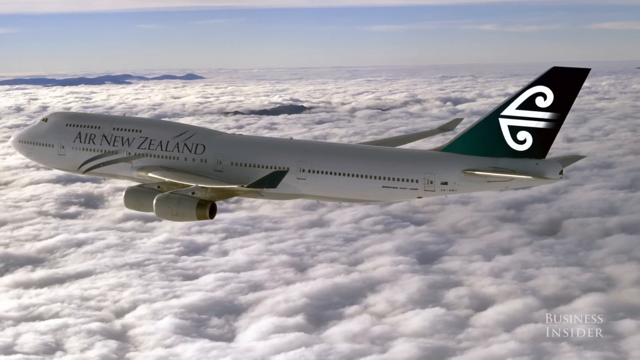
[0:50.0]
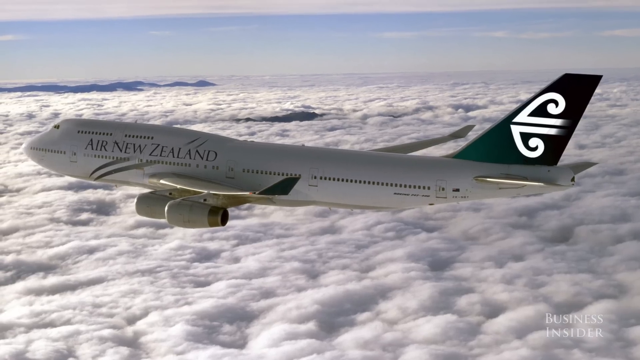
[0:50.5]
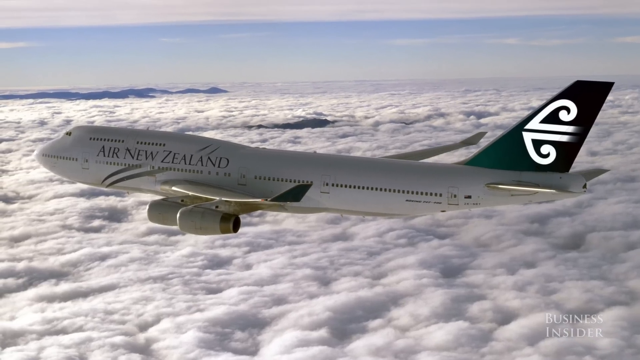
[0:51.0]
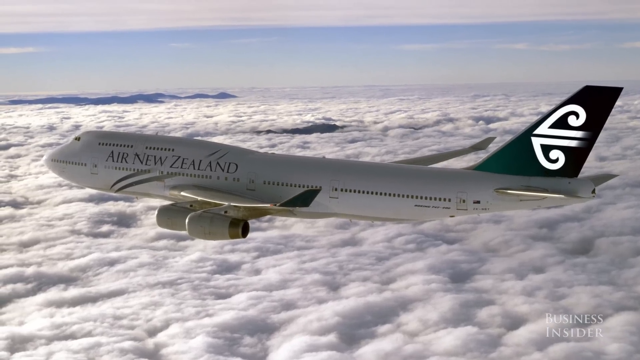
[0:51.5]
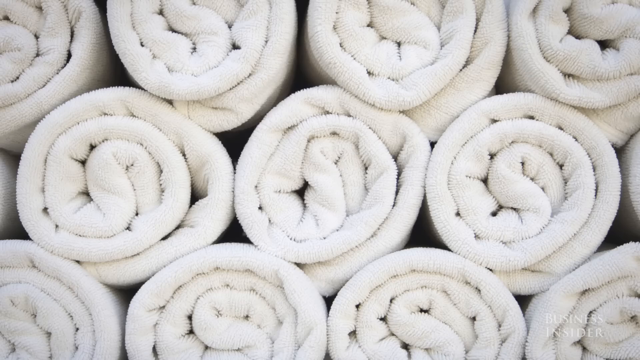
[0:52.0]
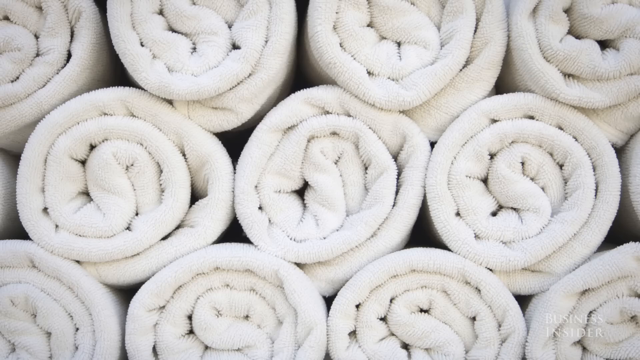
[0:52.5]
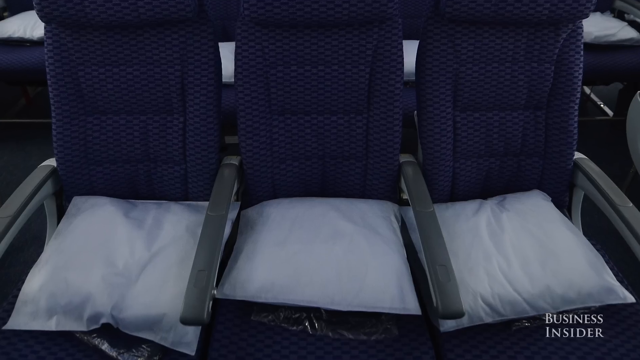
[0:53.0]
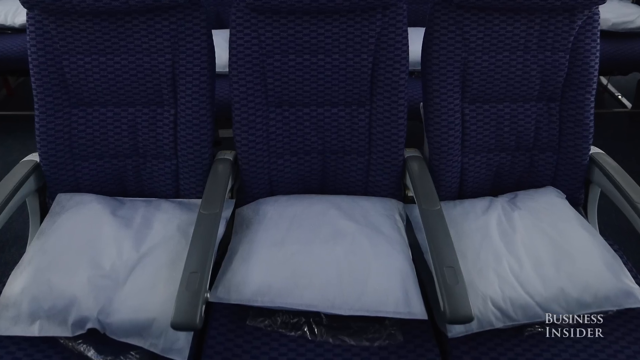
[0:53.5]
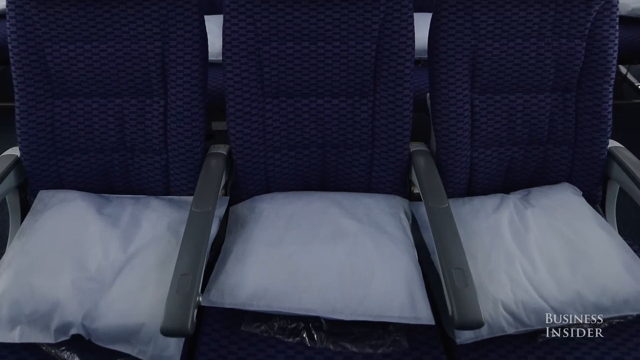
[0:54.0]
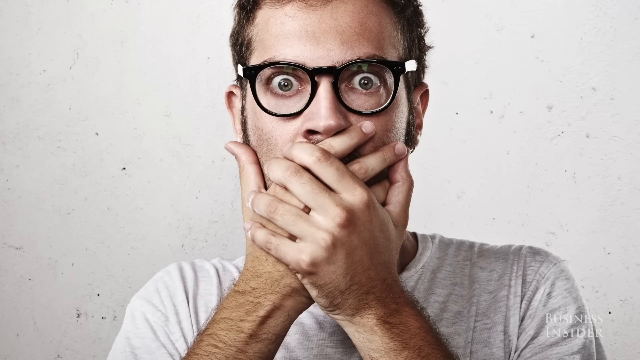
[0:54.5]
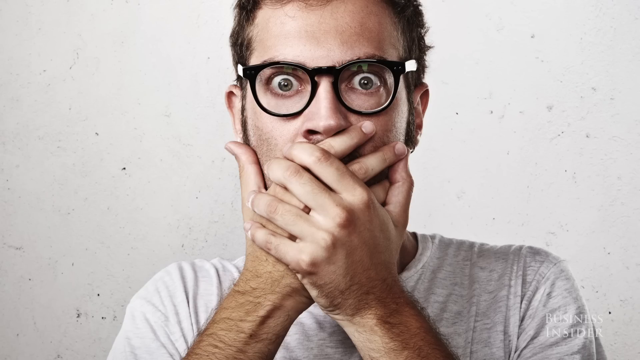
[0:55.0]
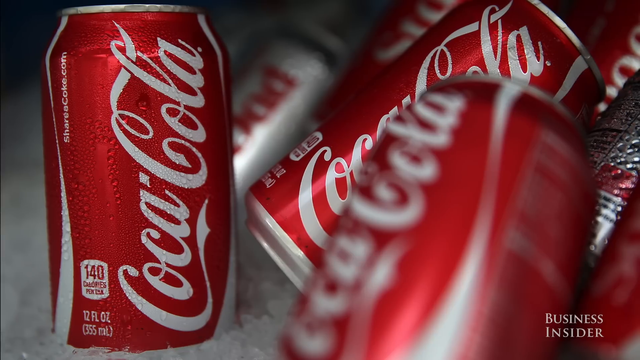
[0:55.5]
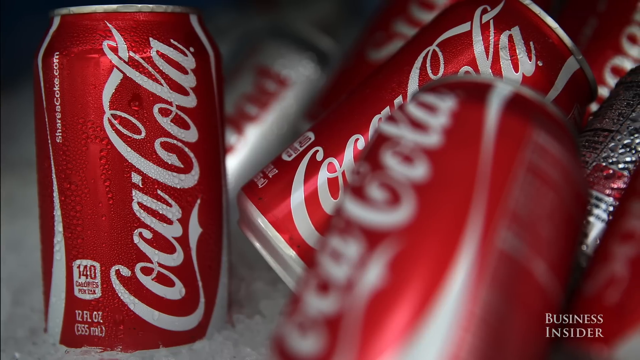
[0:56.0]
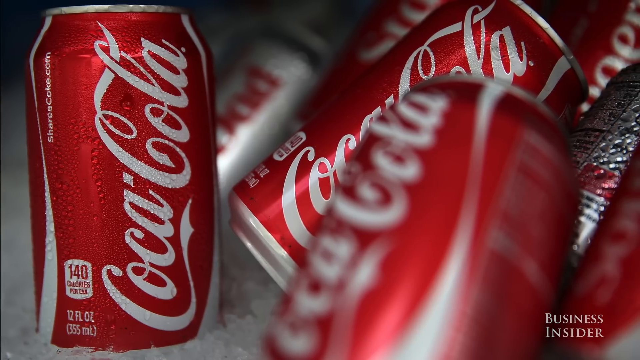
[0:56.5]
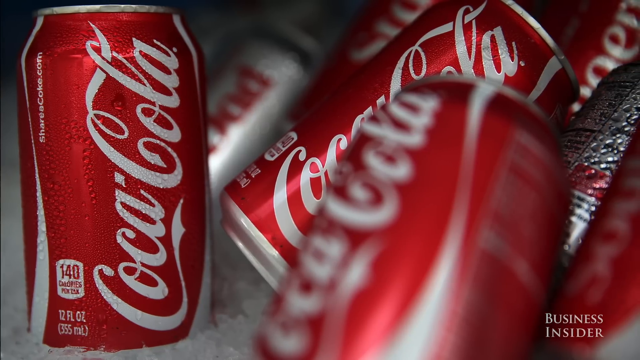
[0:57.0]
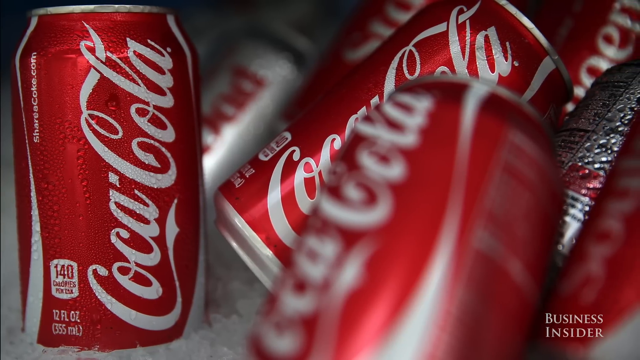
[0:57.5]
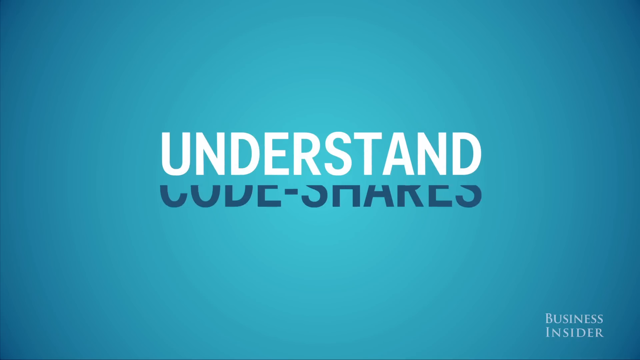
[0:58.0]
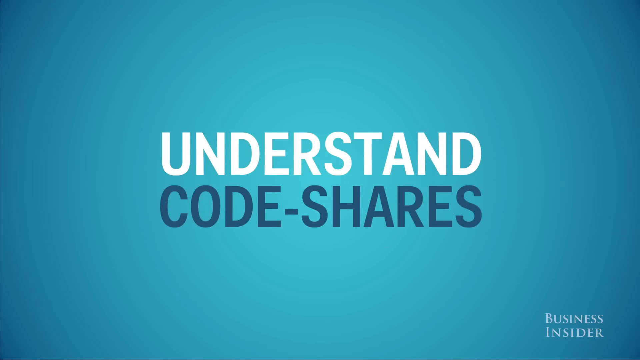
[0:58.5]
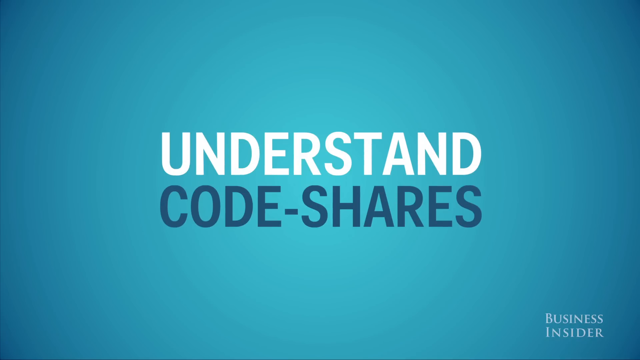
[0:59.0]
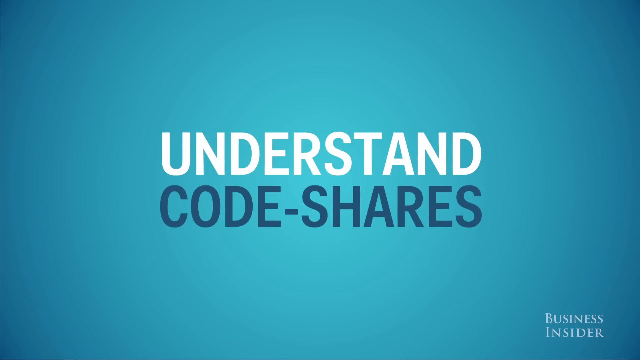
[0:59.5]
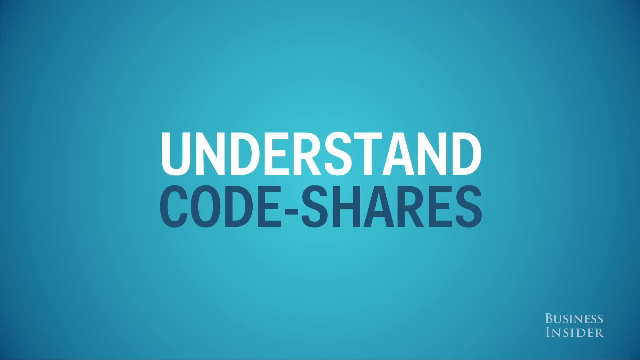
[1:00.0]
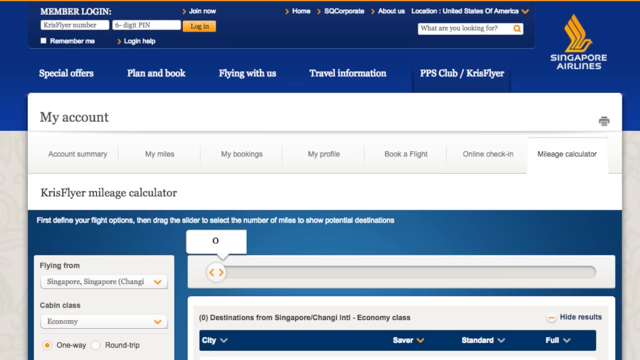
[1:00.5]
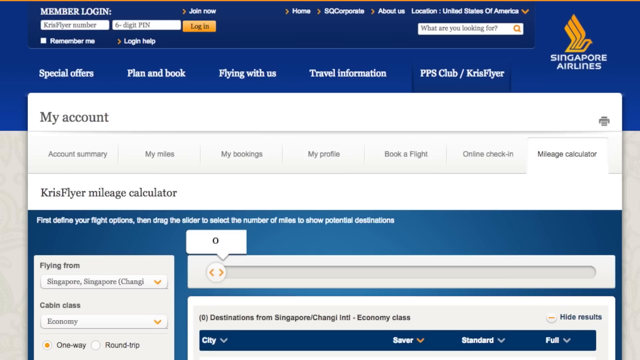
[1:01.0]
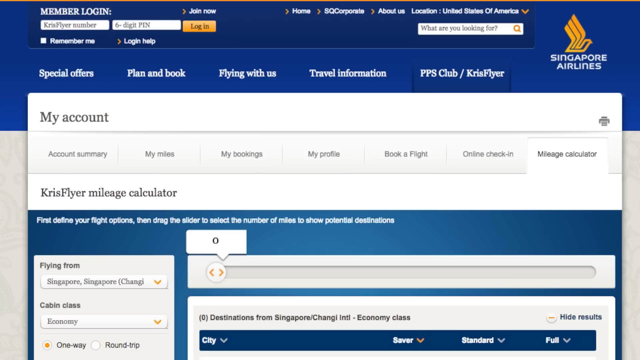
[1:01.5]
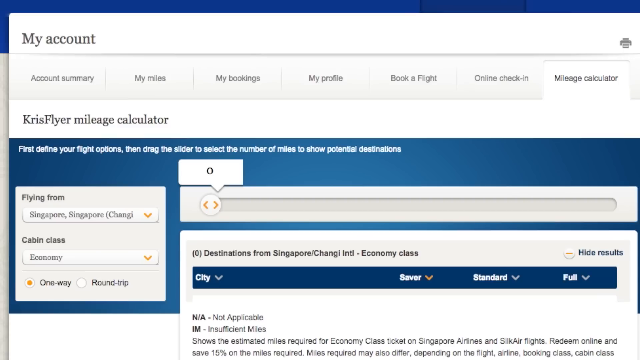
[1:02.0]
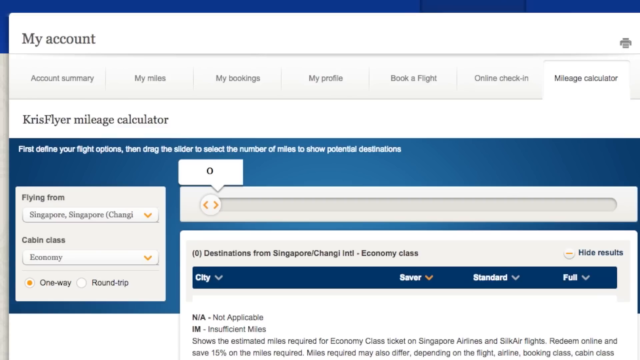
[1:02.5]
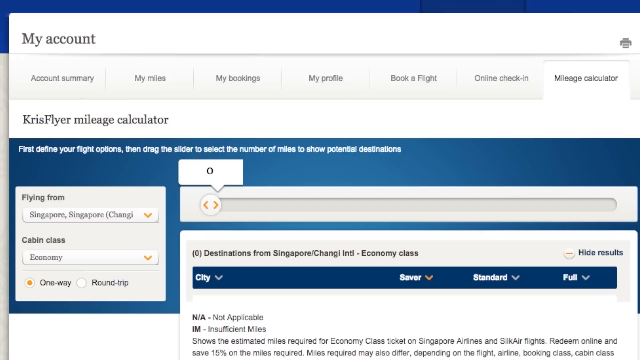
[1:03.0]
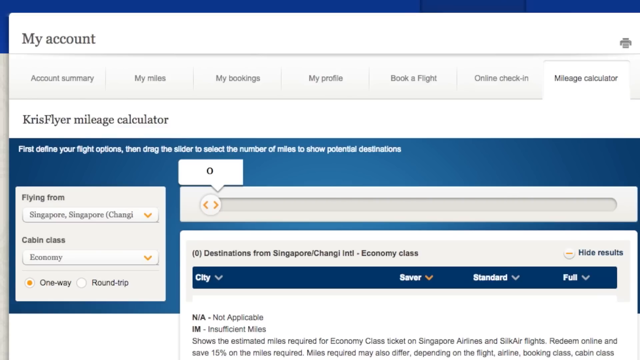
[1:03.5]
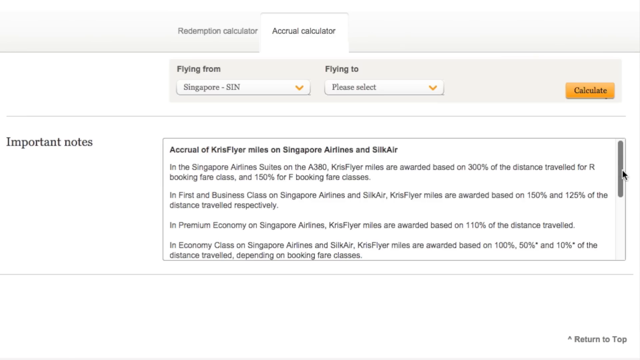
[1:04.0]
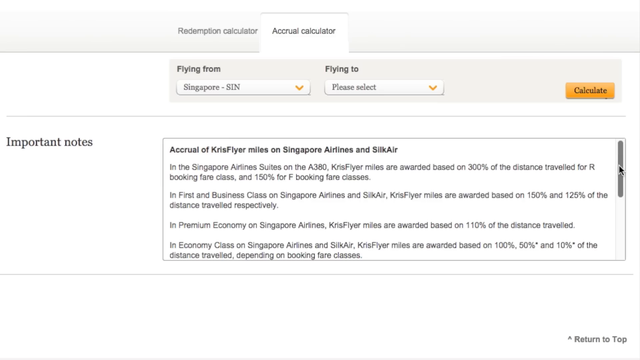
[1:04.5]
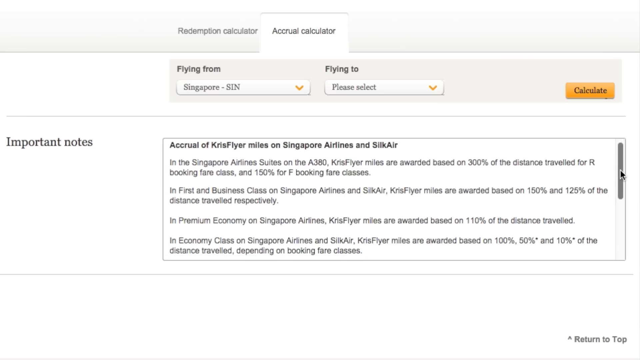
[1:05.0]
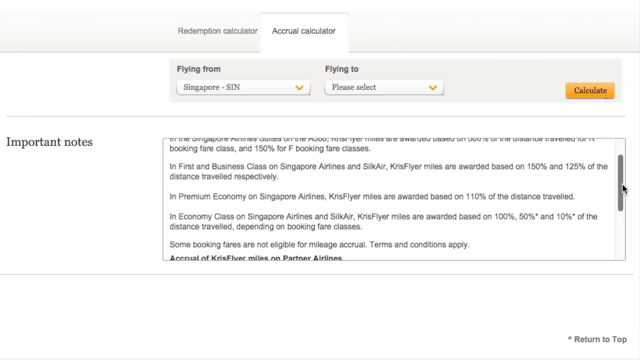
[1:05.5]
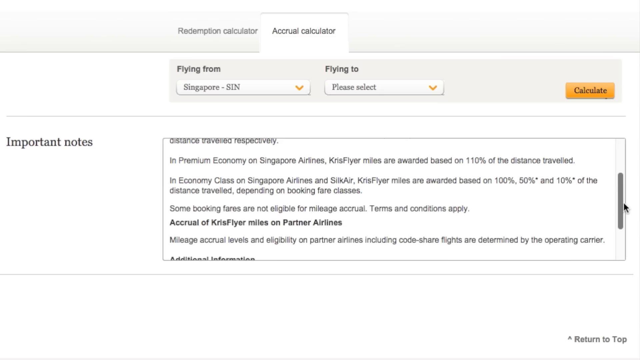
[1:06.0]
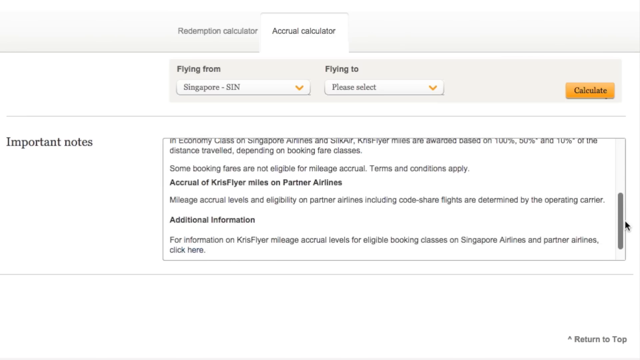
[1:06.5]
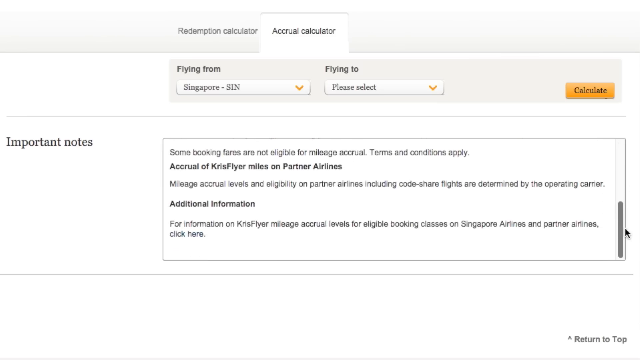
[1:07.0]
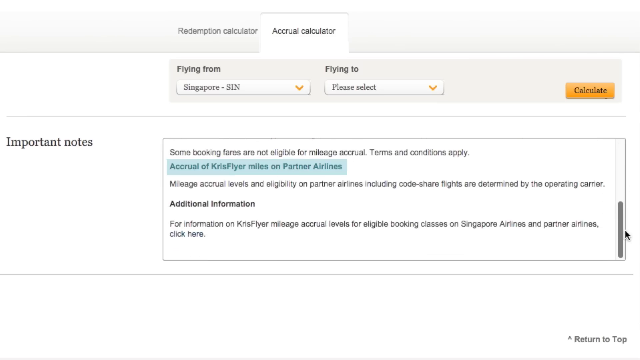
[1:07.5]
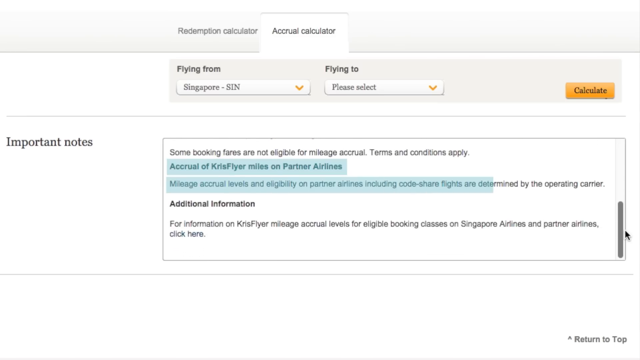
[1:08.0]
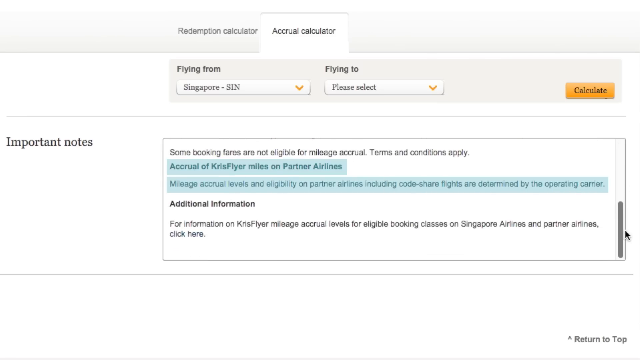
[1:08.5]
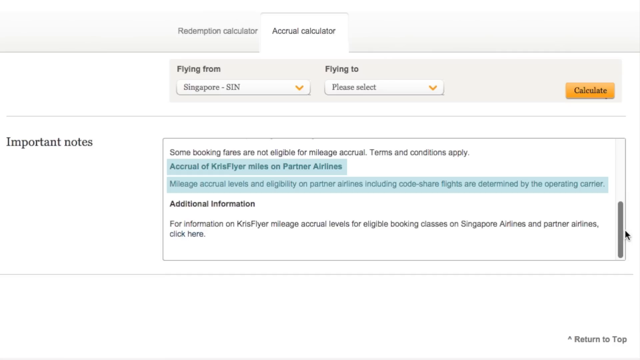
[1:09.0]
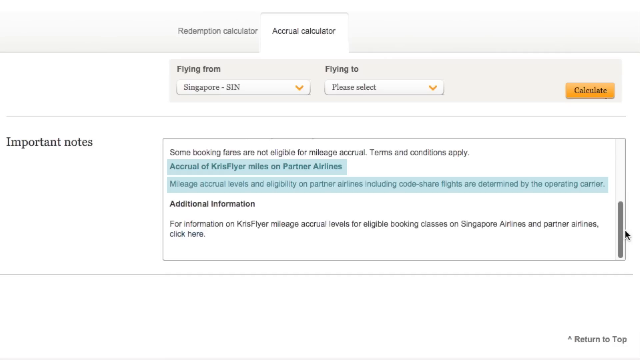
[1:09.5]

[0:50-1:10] An airplane appears, followed by pictures of rolled white towels stacked on top of each other, nine of them, and airplane seats with white pillows. A man holds his hand over his mouth, with his other hand over that hand. Coca-Cola cans appear: eight cans, four red cans, and six cans at different moments. Text reads "understand code shares." An account page shows "my account," "Chris Flyer," "mileage calculator" and "important notes" about flying to Singapore, as well as "actual accrual of Chris Flyer miles on partner airlines," with B.I. on screen. The account is scrolled through, with some sections highlighted. An Air New Zealand airplane flies in the air, an airplane flies over the clouds, Singapore Airlines appears, a 747 airplane is pictured, and three airplane seats are shown.